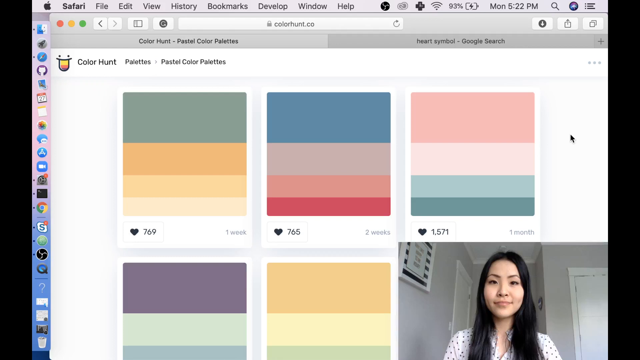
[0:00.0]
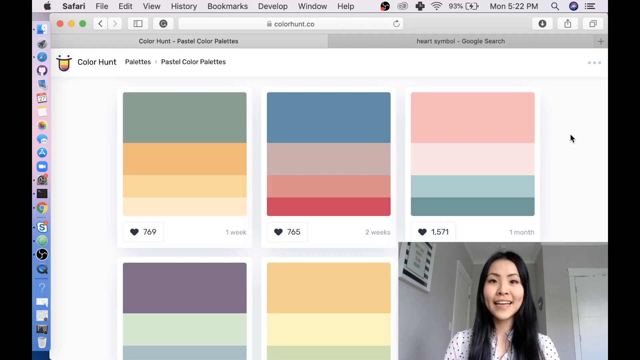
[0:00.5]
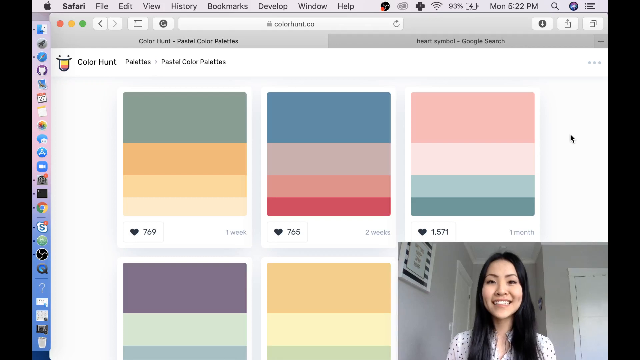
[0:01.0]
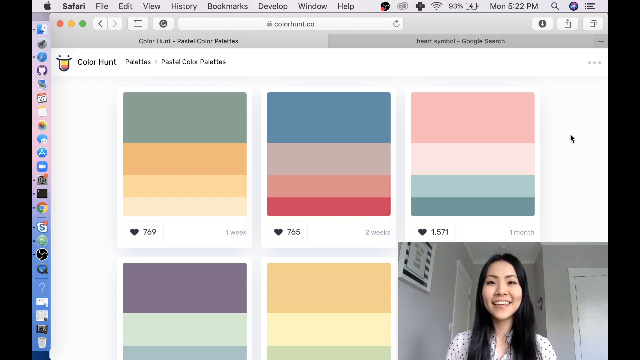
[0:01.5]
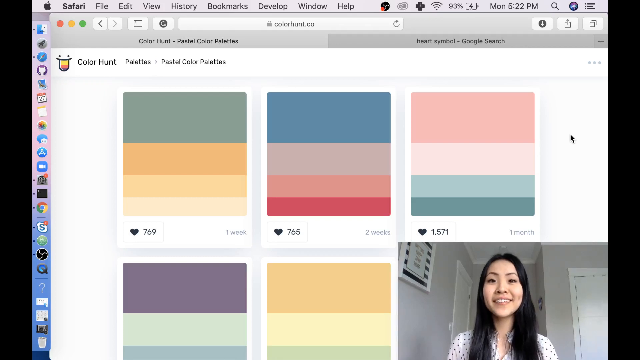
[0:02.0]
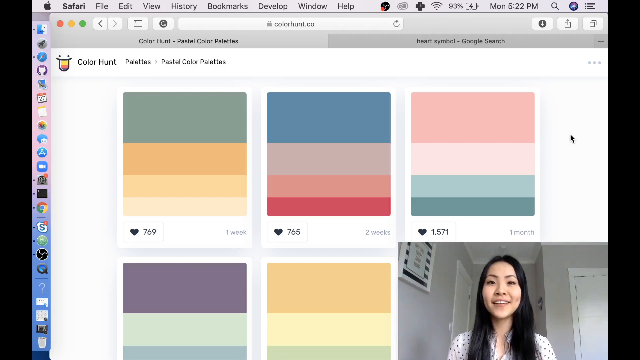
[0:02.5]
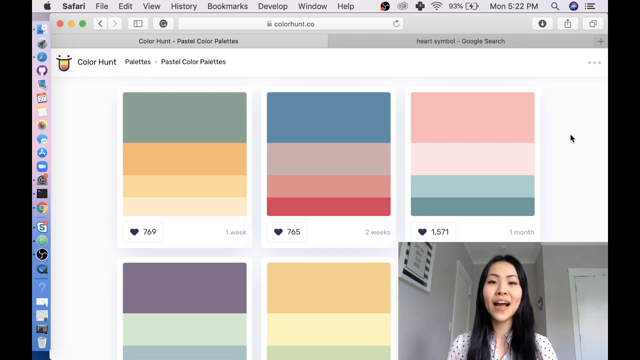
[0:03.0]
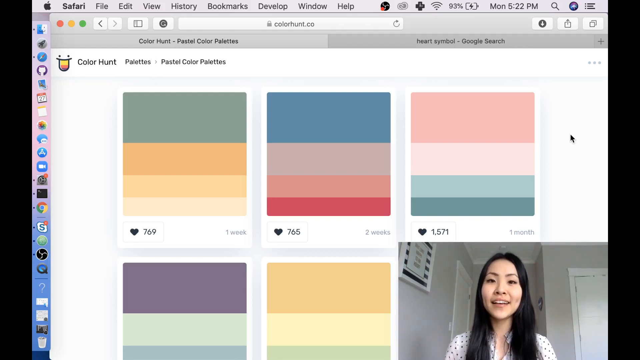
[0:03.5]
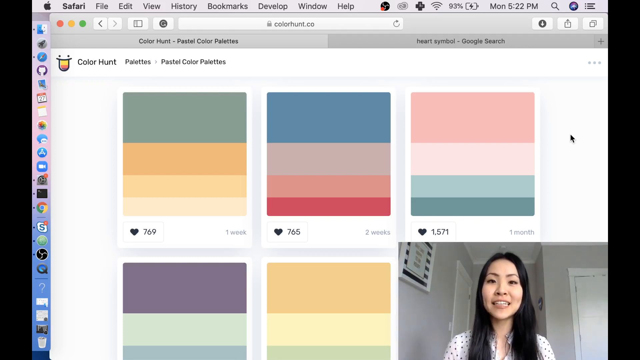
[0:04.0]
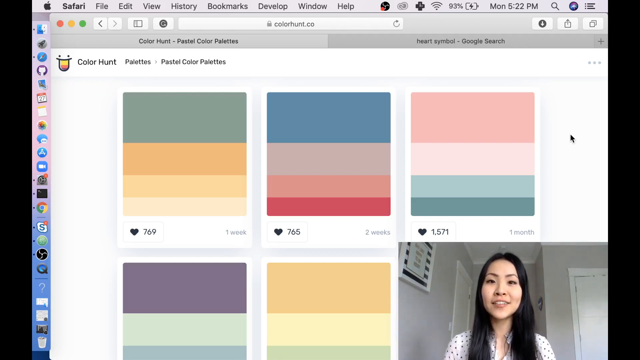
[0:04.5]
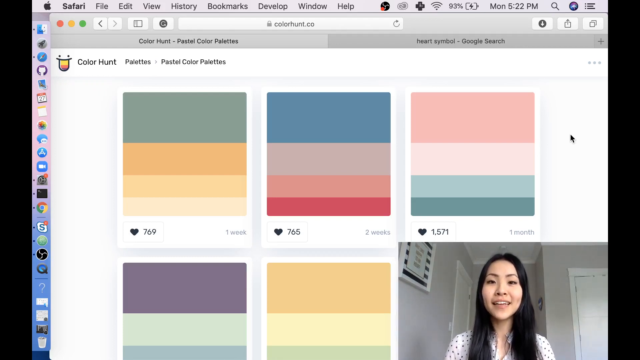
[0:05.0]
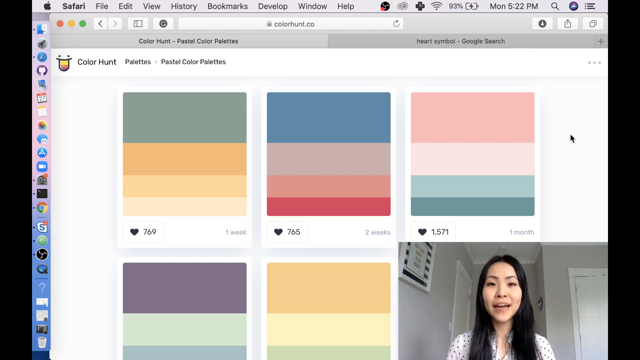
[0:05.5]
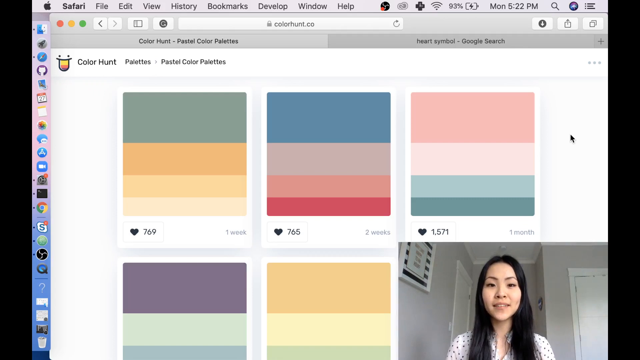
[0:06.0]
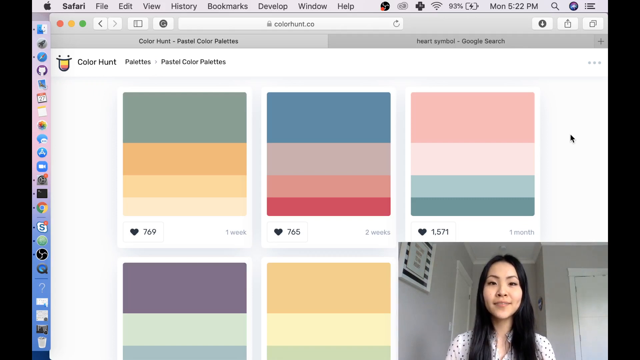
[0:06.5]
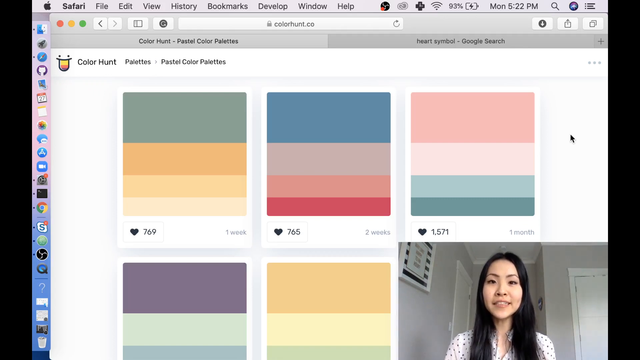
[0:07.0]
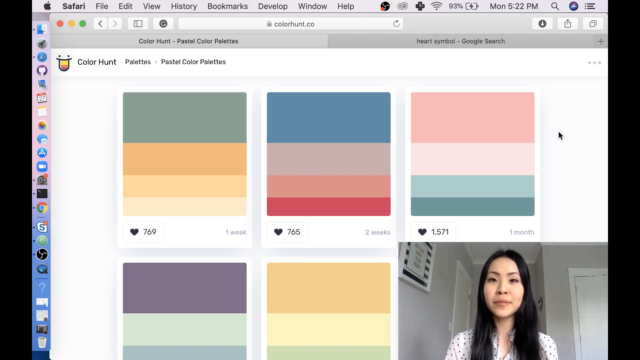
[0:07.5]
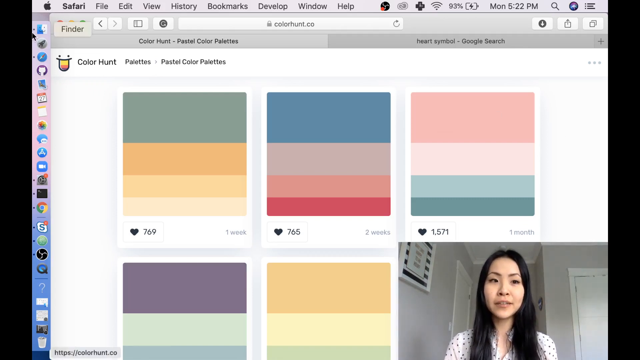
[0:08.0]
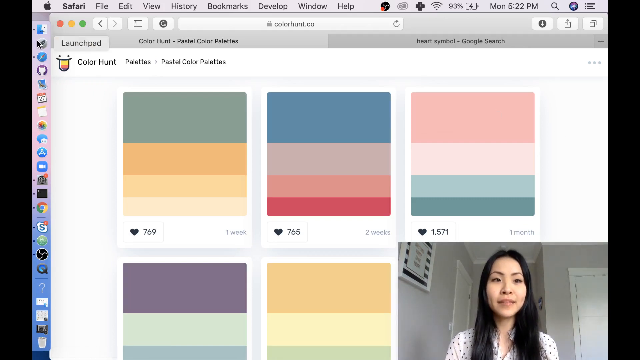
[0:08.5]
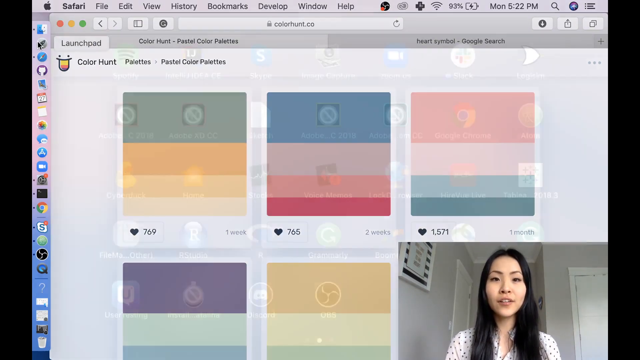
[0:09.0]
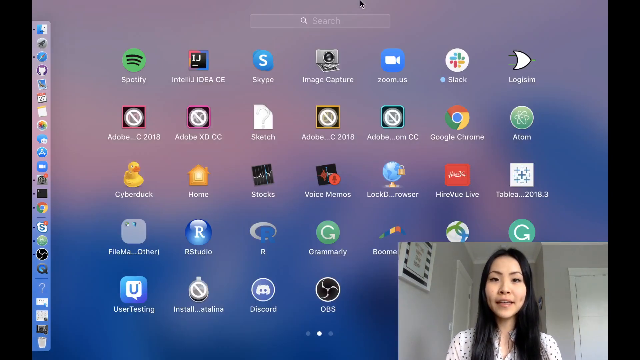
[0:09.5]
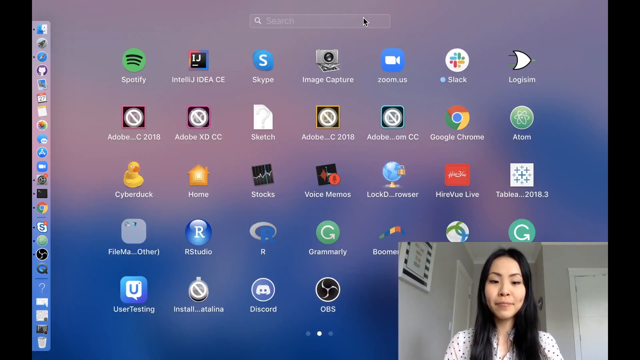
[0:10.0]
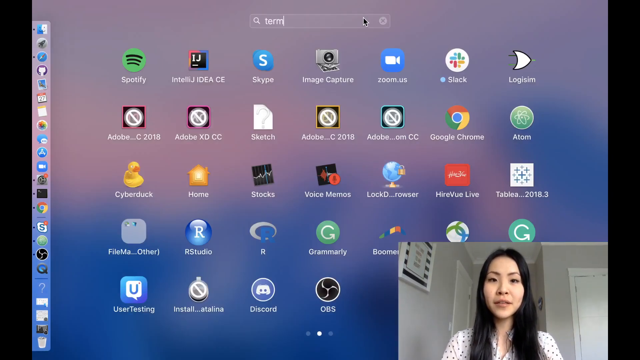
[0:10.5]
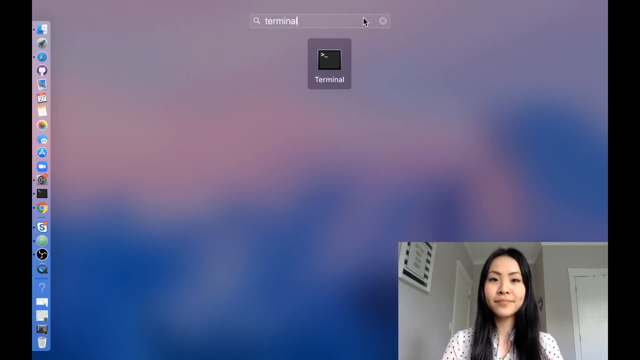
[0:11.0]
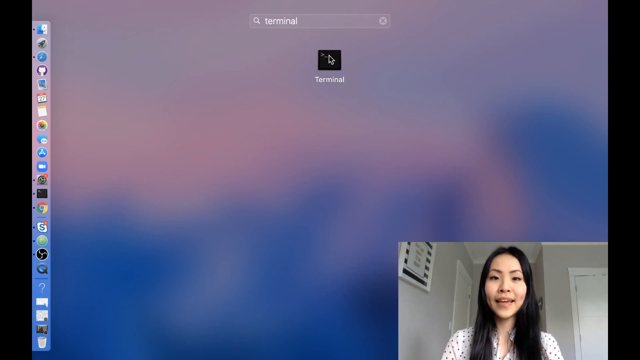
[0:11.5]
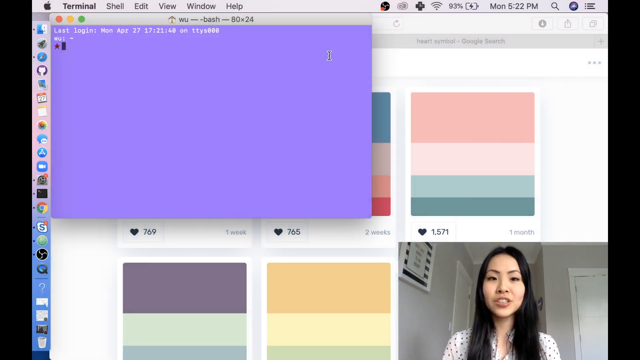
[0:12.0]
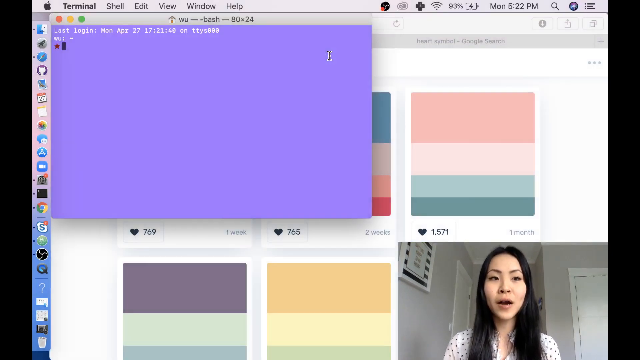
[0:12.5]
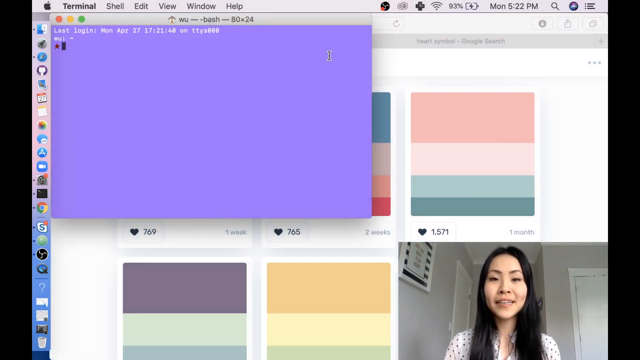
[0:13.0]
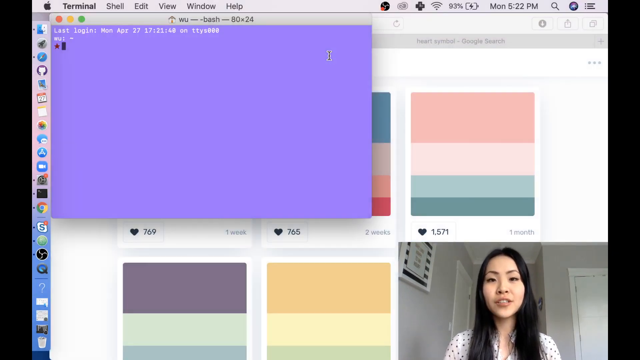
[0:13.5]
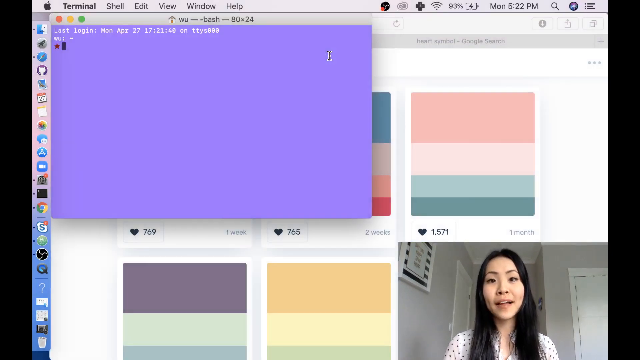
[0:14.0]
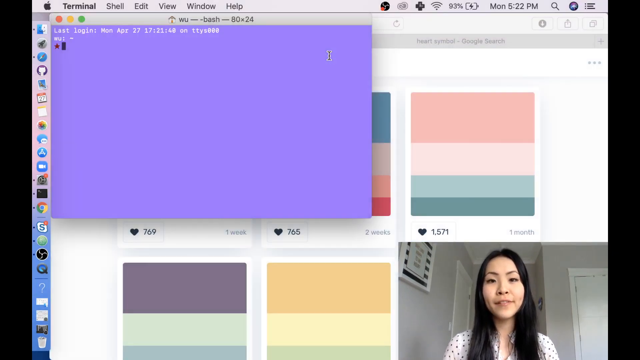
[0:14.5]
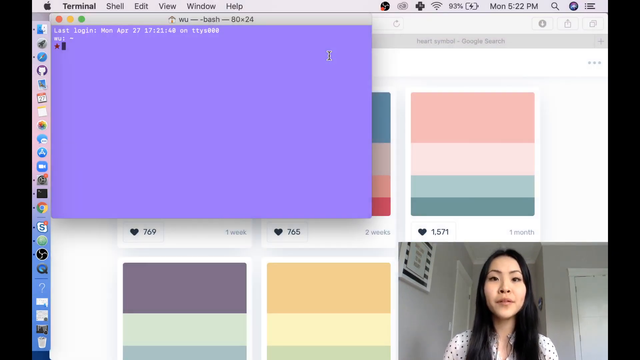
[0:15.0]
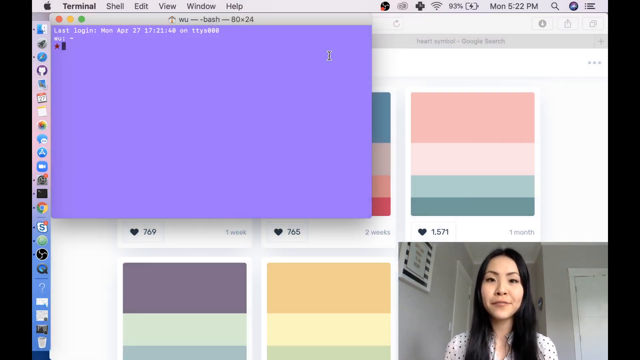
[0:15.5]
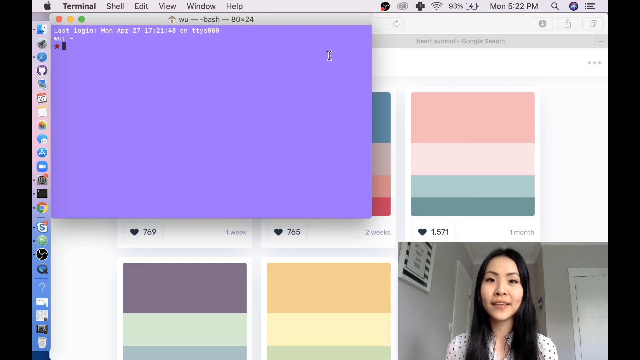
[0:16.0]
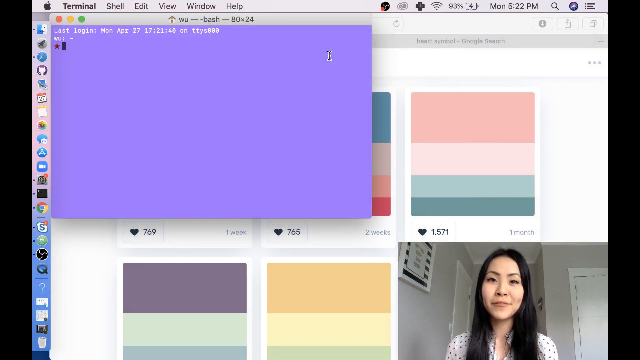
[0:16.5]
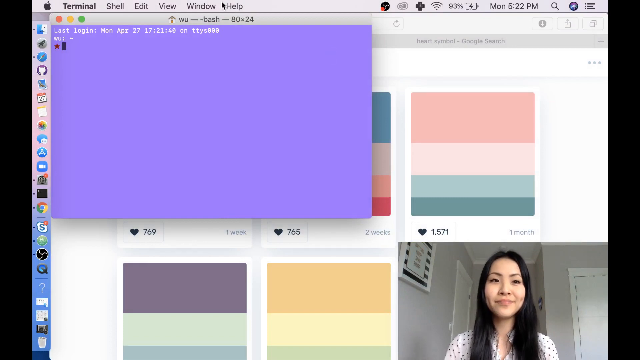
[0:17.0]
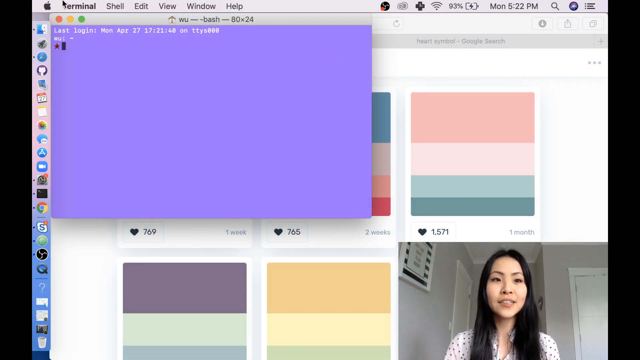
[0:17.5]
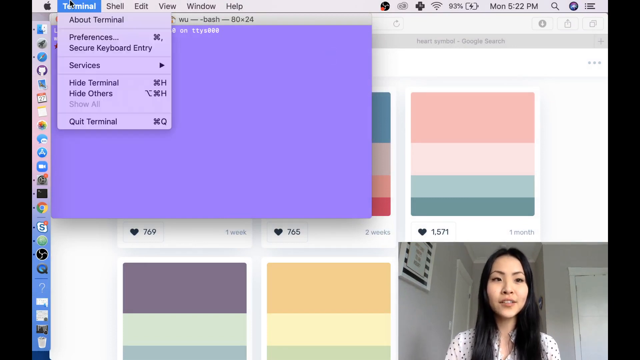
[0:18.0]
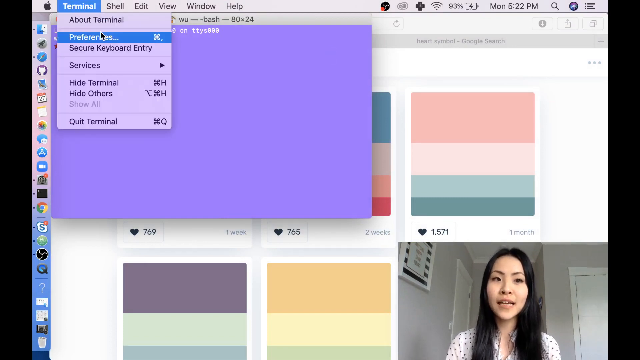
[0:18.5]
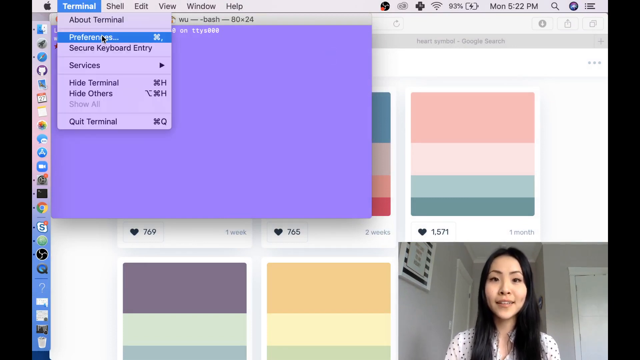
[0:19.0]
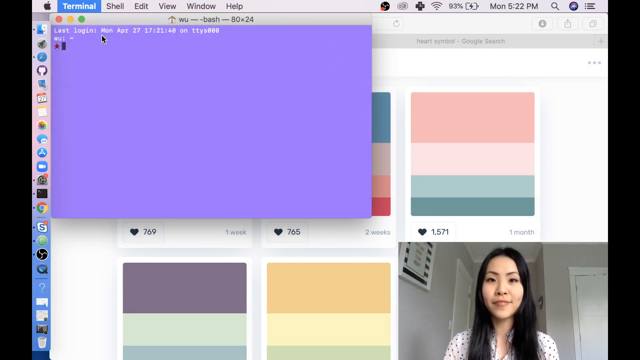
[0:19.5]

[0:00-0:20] An Asian woman appears in the bottom right-hand section of the screen in a screen-share, screen-capture setup, while the left-hand section shows a number of different color schemes. She smiles and talks directly to the camera.